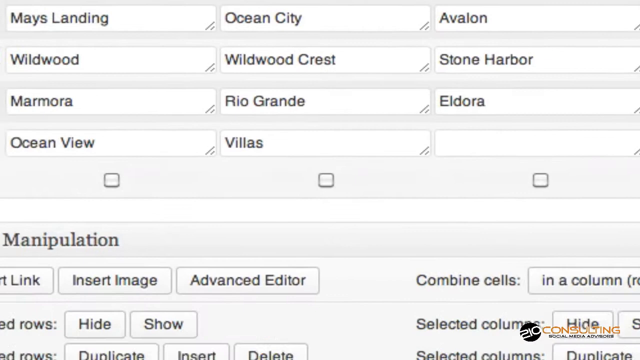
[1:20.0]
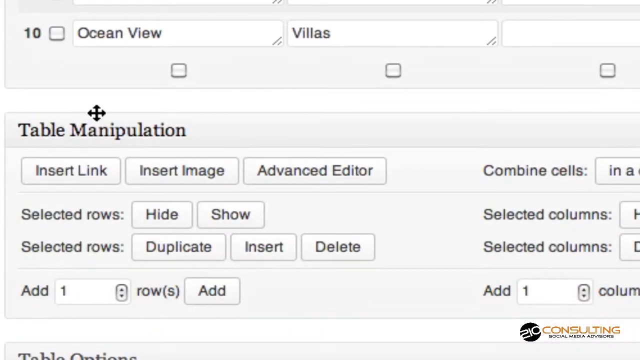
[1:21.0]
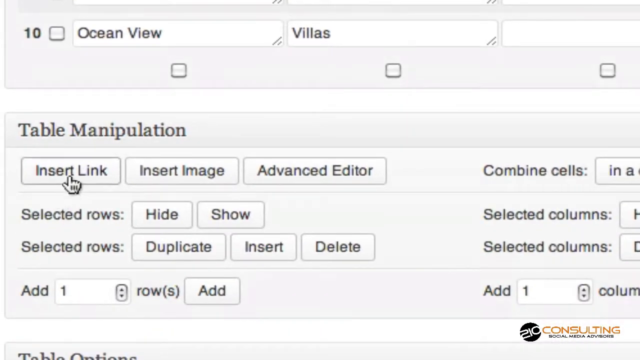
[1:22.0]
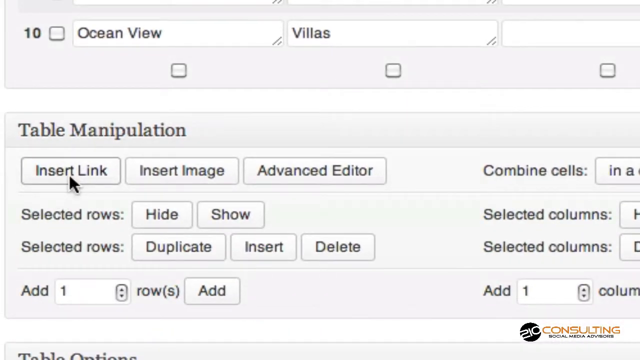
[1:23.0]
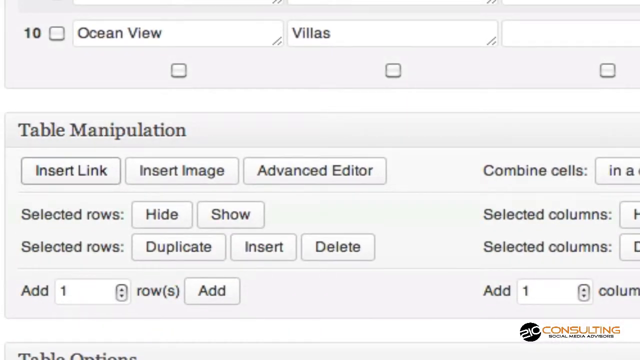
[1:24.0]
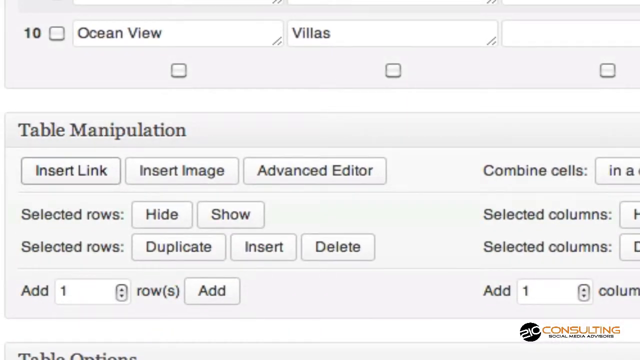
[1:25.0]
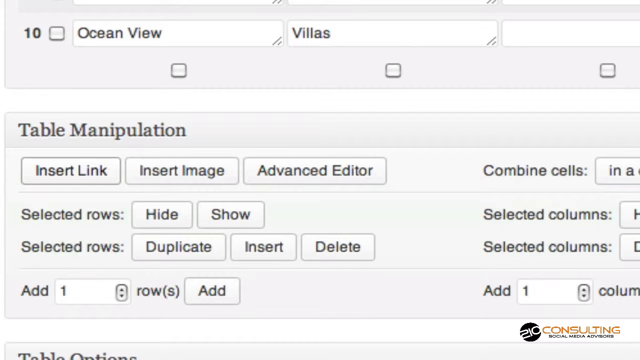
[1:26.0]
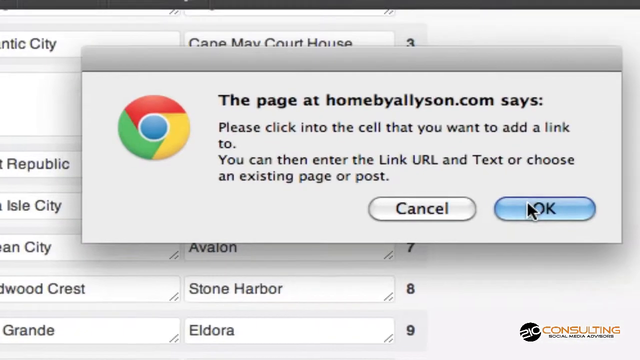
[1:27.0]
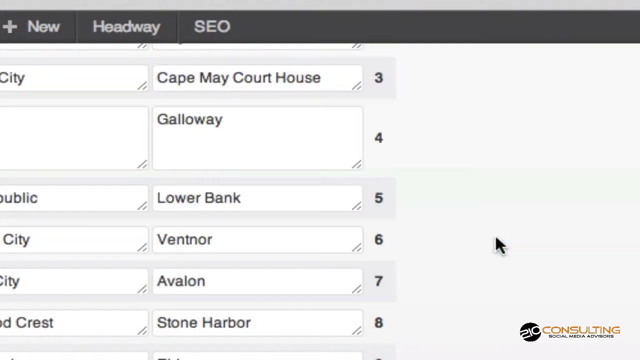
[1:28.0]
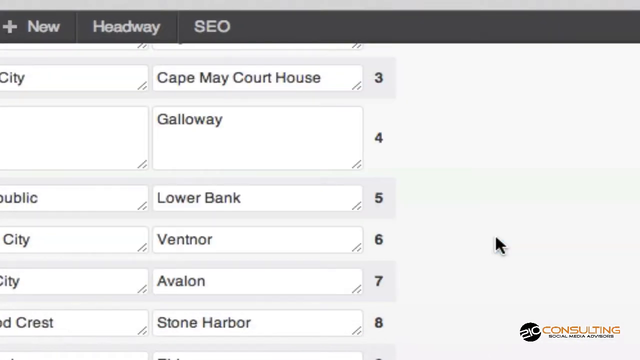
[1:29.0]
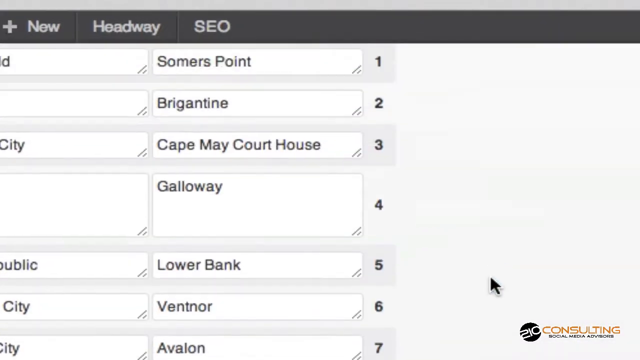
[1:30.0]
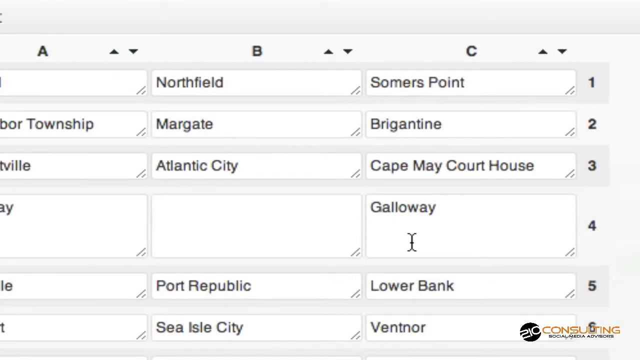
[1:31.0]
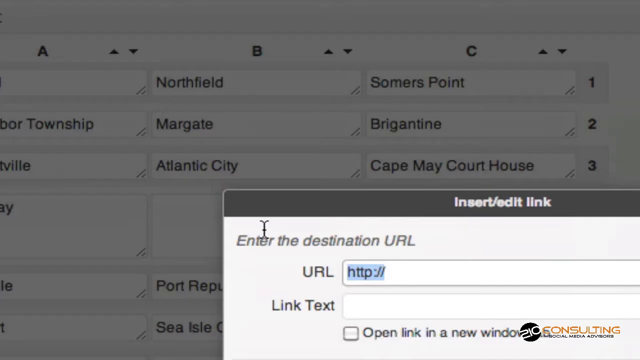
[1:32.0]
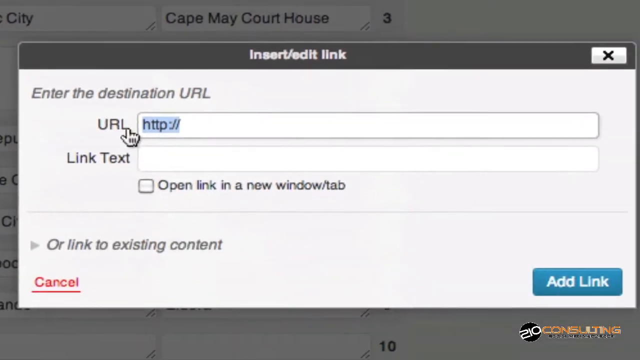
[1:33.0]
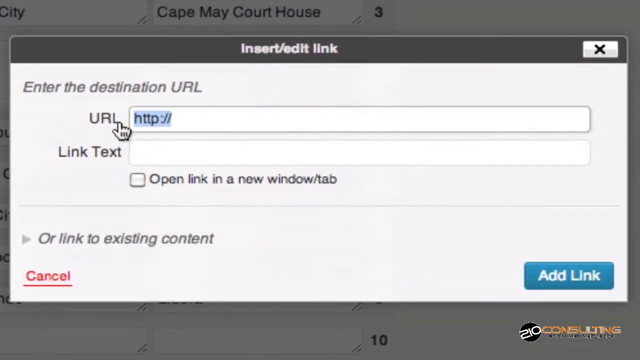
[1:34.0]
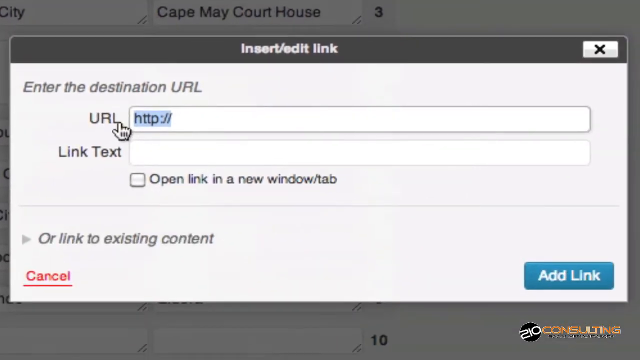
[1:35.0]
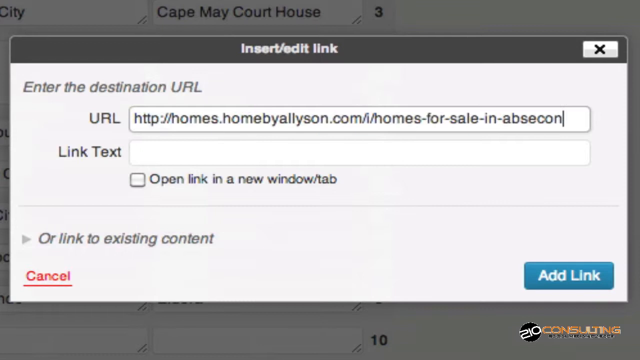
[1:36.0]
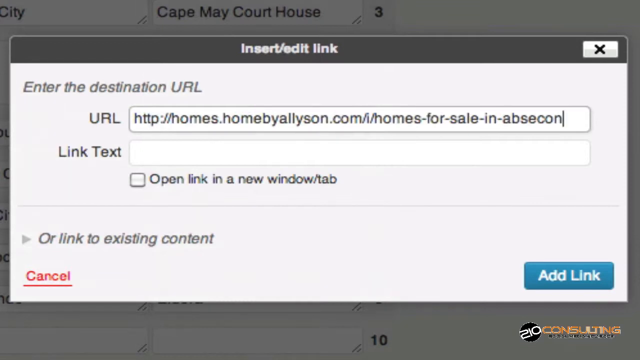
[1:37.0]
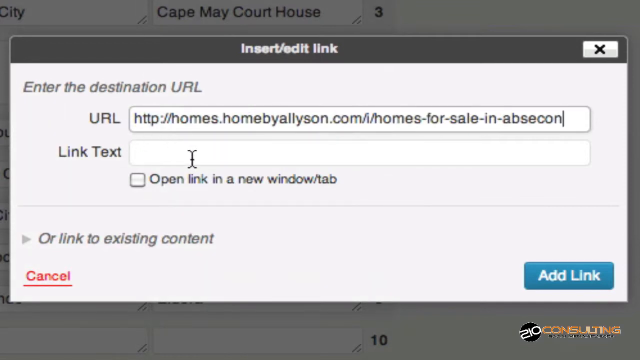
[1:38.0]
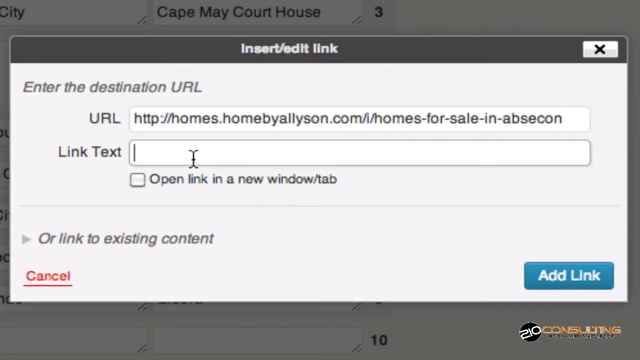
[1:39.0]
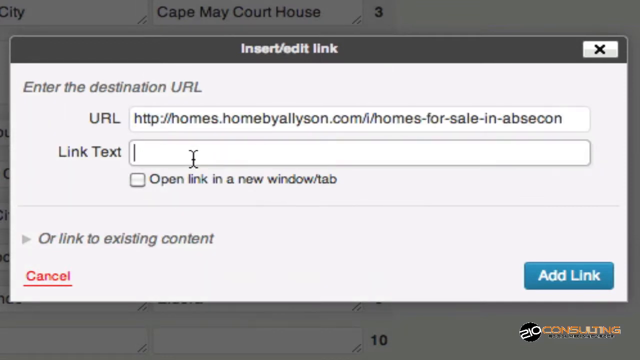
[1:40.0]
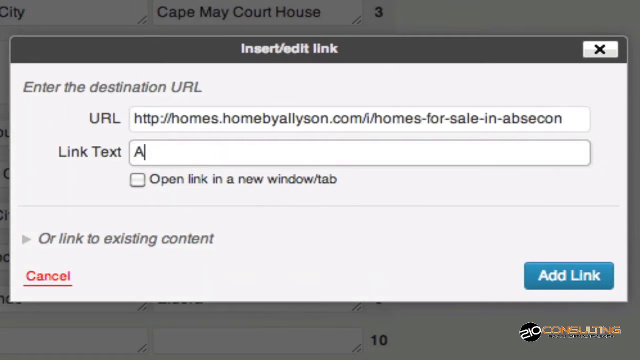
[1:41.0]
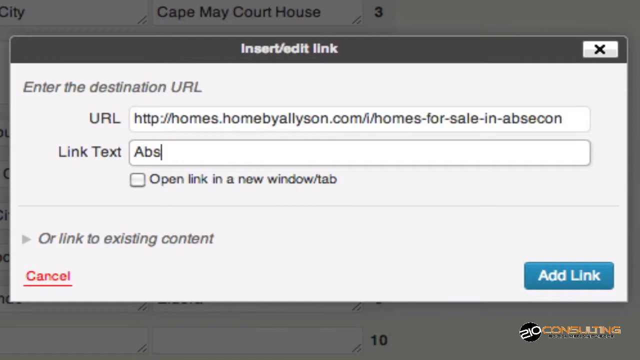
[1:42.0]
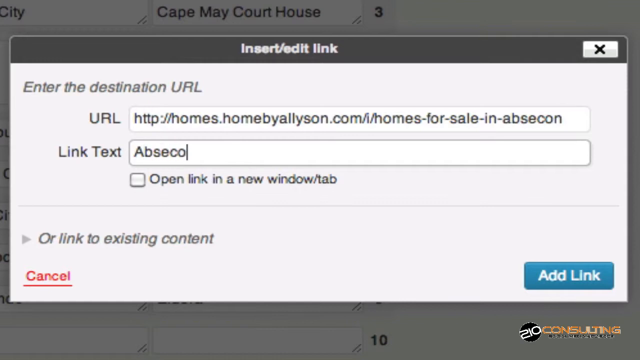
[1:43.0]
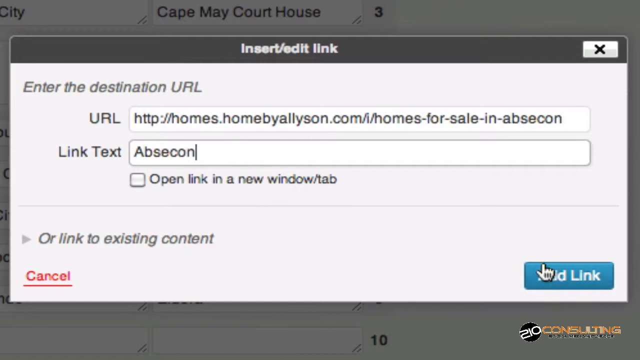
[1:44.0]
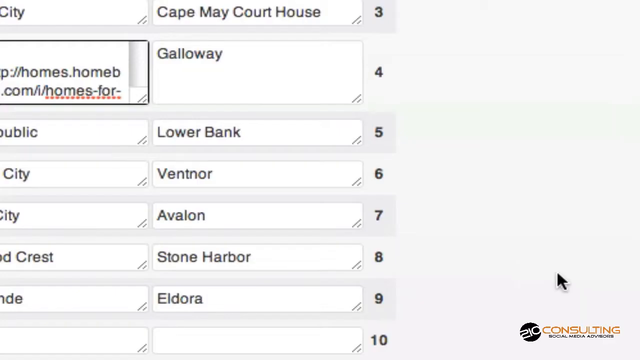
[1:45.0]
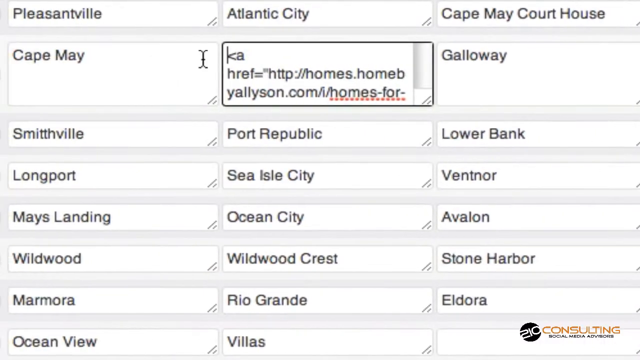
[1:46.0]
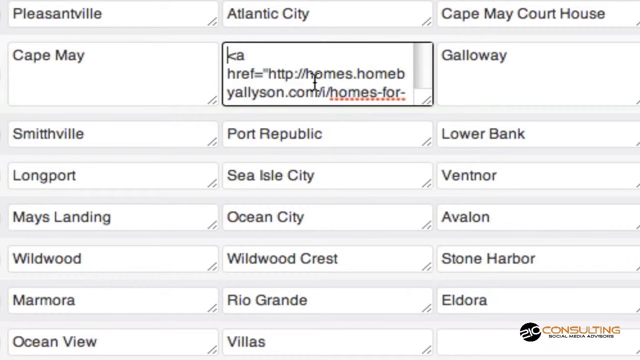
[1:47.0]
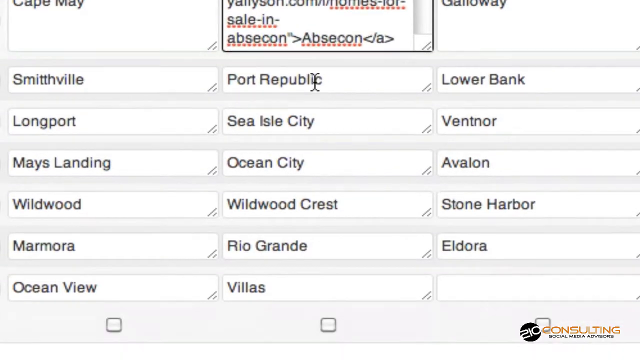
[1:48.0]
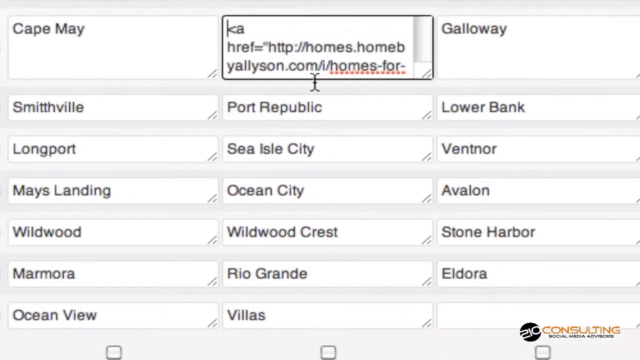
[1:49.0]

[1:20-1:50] Work continues under the table manipulation heading. The cursor hovers over the insert link button, directly below the words table manipulation, and the little white hand appears there before, presumably, clicking it. After the insert link button is clicked, the screen goes up to a Google image icon with the words "the page at home by Allyson says, please click into the cell that you want to add a link to. You can then enter the link URL and text or choose an existing page or post." The buttons on this pop-up are okay, in blue, and cancel. The user clicks okay, returning to the blank entry where Absecon was previously deleted. A box pops up with a black banner on top that reads "insert or edit link", with an option to exit the box. It says "enter the destination URL" and has a URL field and a link text field, with a blue add link button in the bottom right corner. The user enters a URL and puts in the link text abscon before clicking add link, which returns to the list of cities.